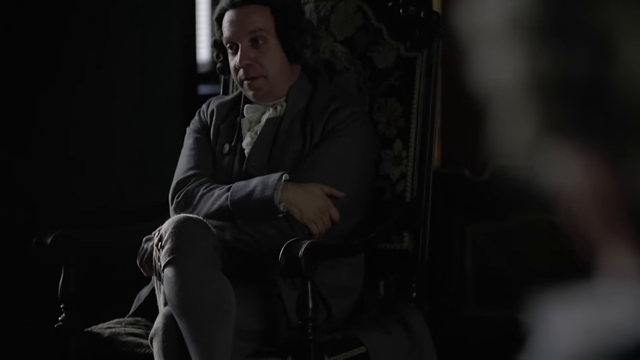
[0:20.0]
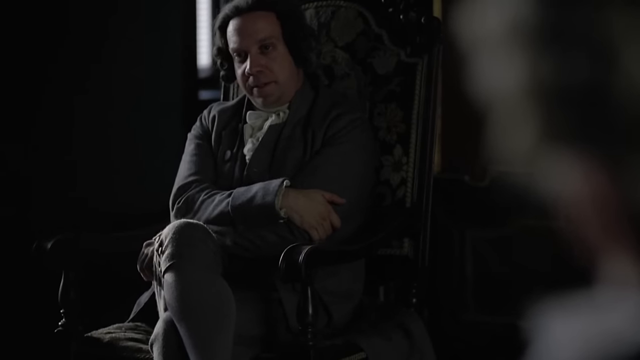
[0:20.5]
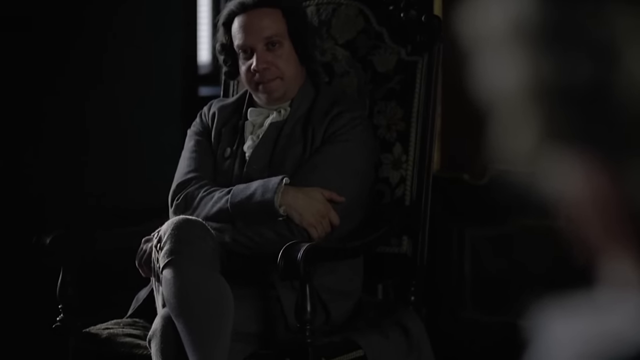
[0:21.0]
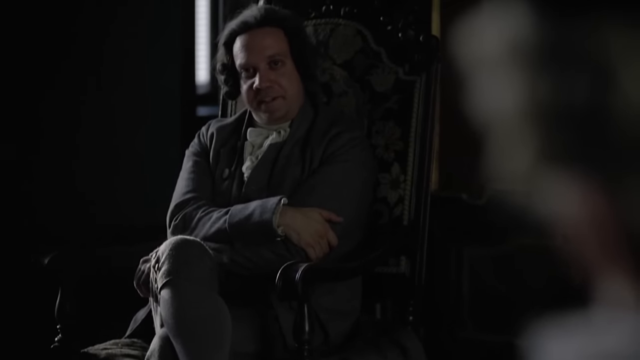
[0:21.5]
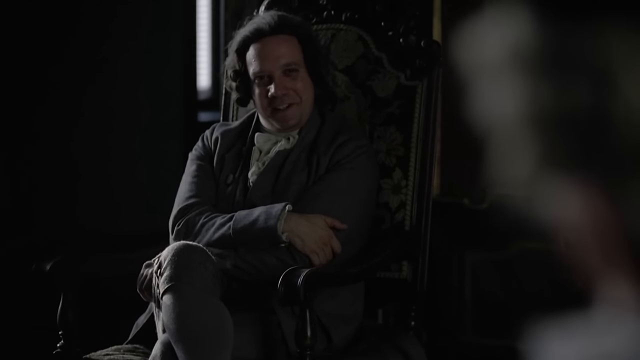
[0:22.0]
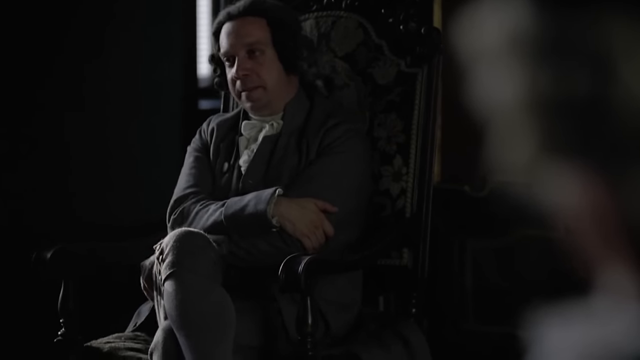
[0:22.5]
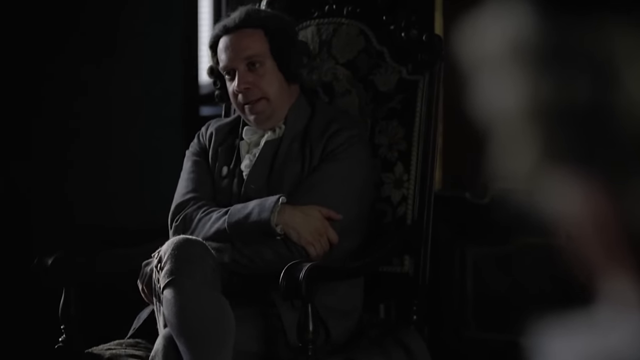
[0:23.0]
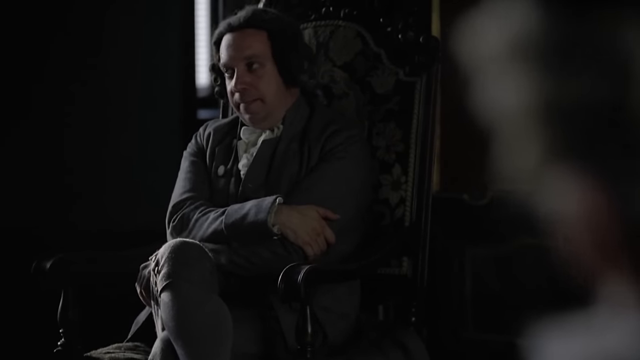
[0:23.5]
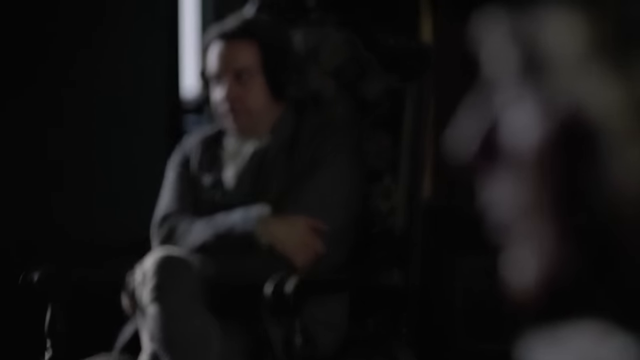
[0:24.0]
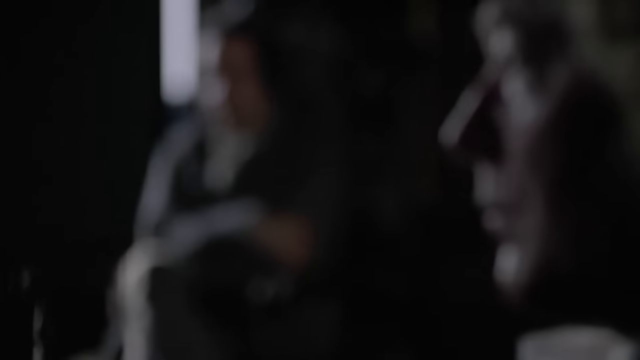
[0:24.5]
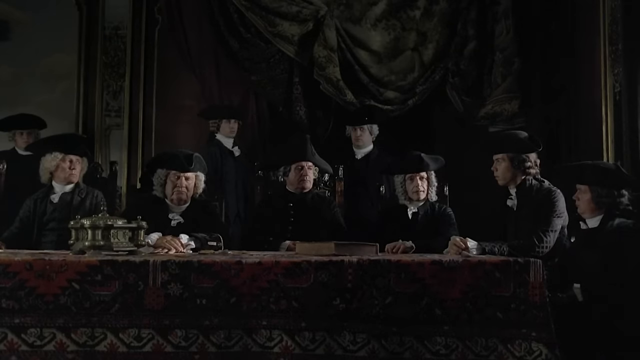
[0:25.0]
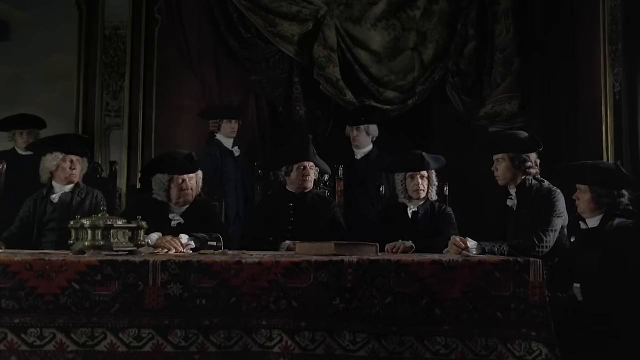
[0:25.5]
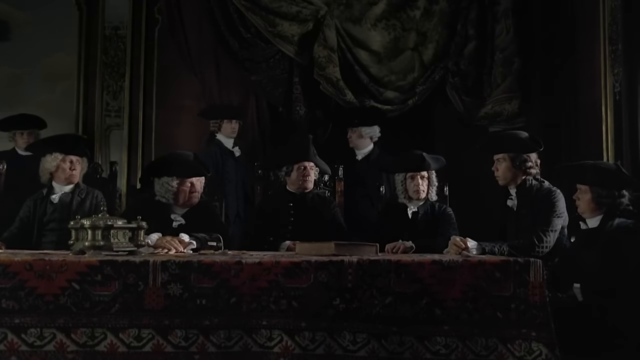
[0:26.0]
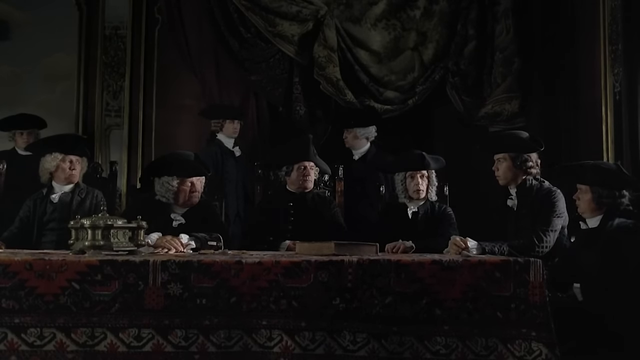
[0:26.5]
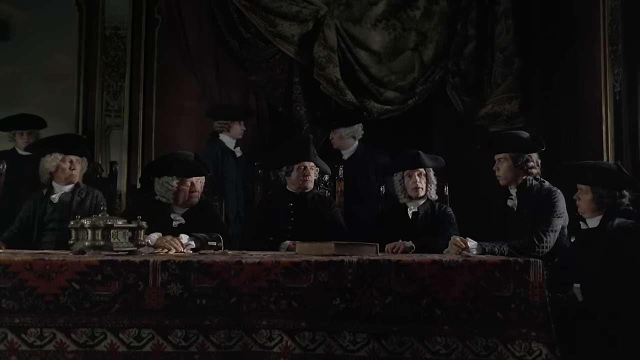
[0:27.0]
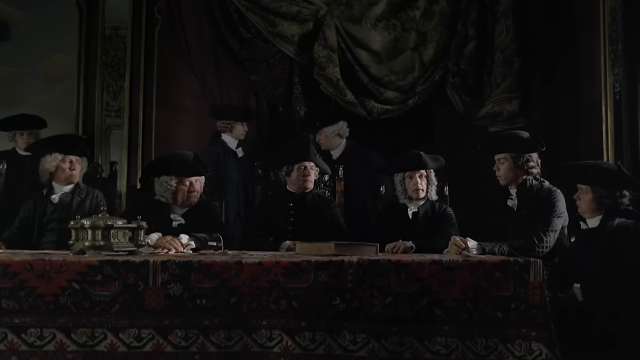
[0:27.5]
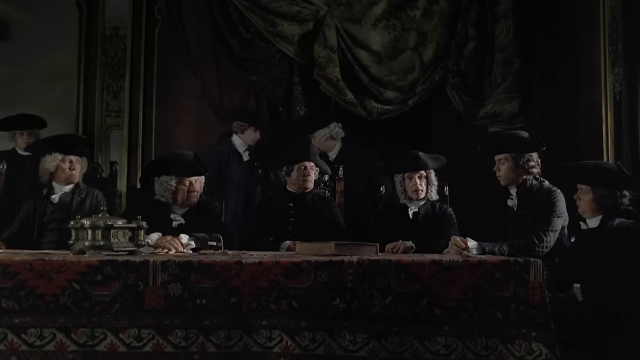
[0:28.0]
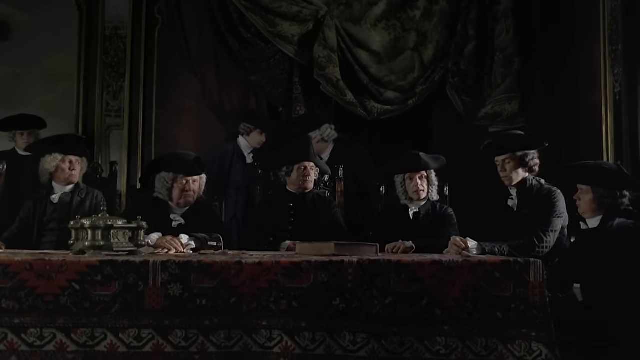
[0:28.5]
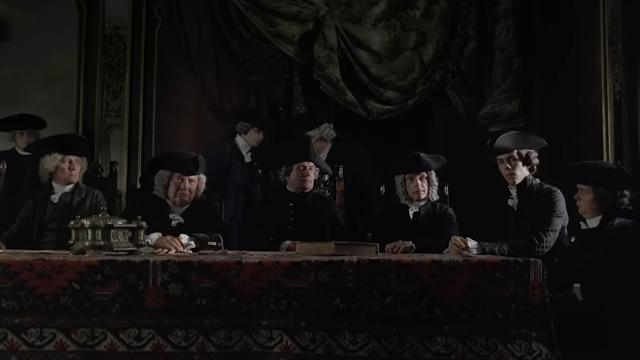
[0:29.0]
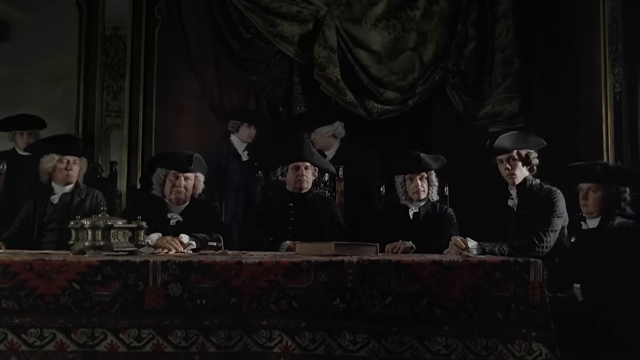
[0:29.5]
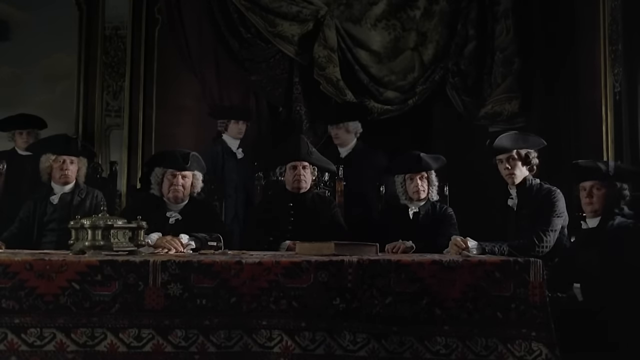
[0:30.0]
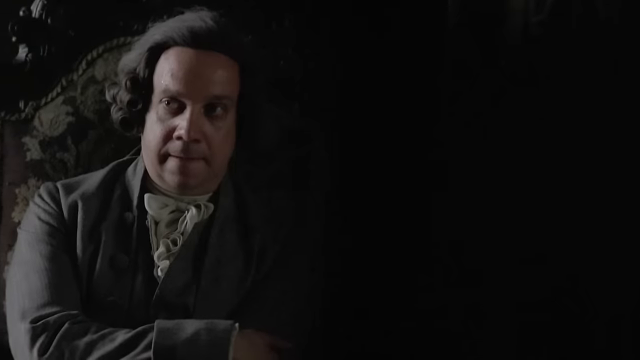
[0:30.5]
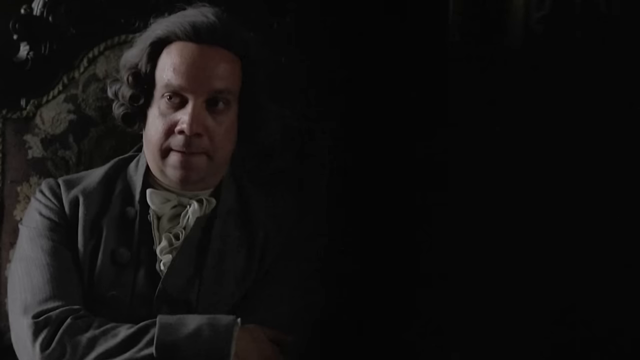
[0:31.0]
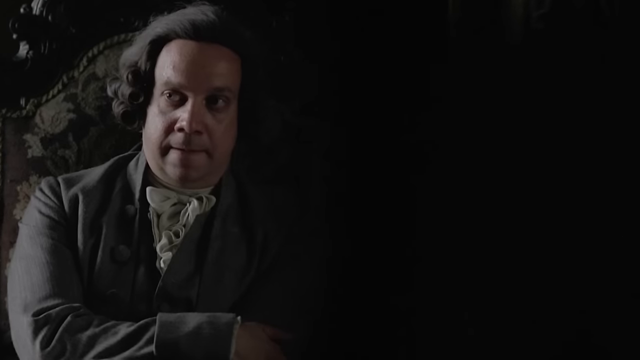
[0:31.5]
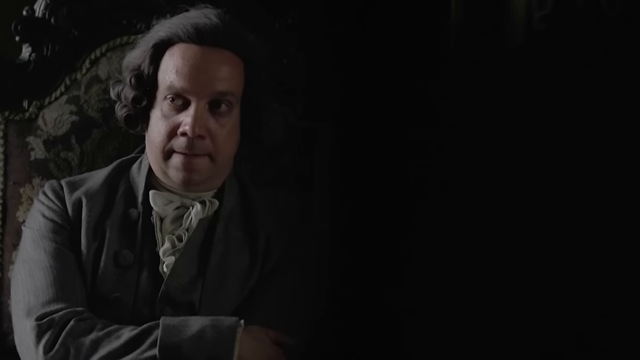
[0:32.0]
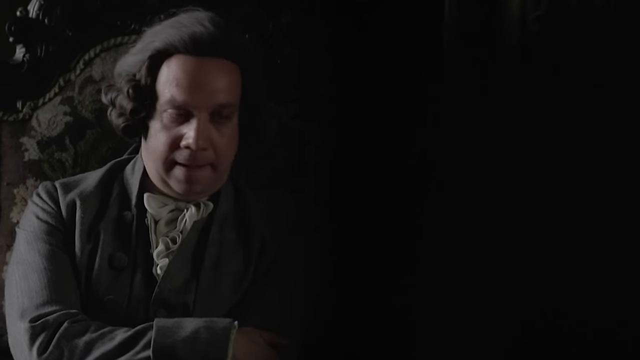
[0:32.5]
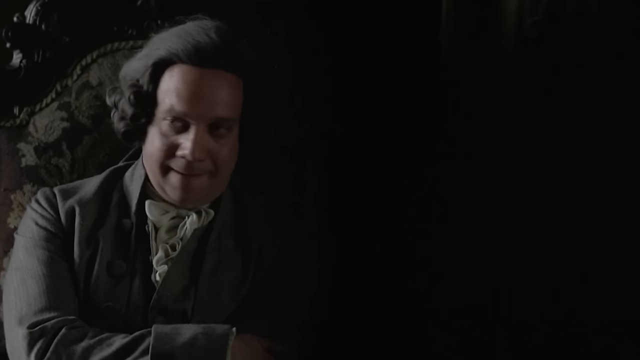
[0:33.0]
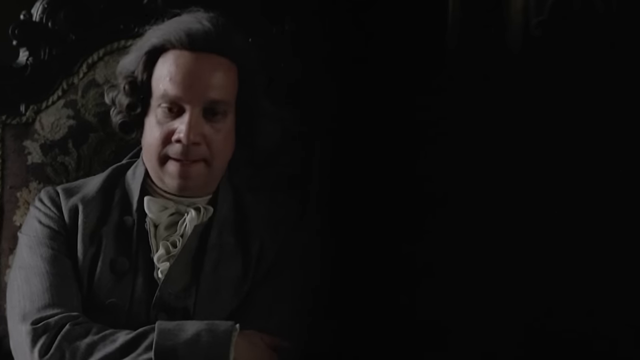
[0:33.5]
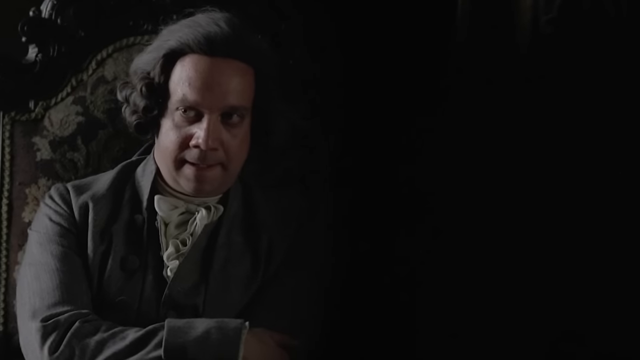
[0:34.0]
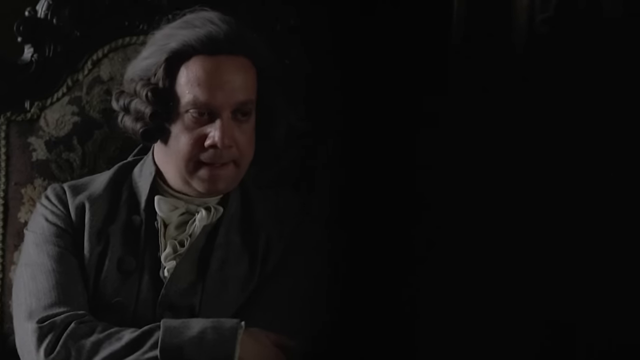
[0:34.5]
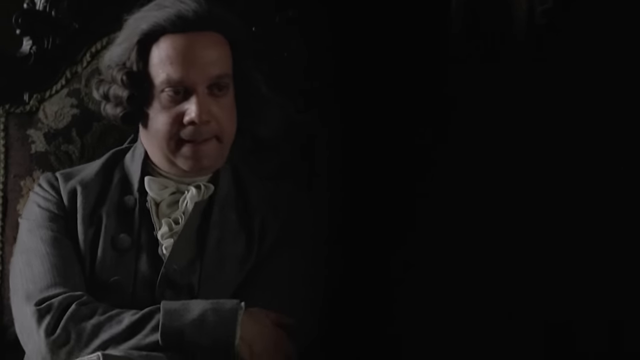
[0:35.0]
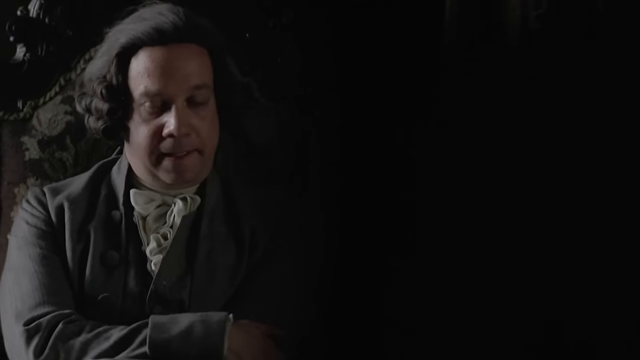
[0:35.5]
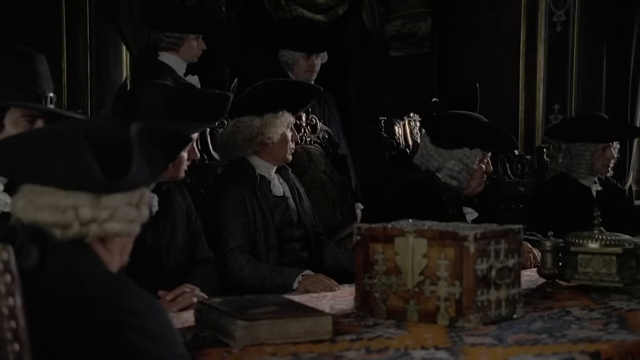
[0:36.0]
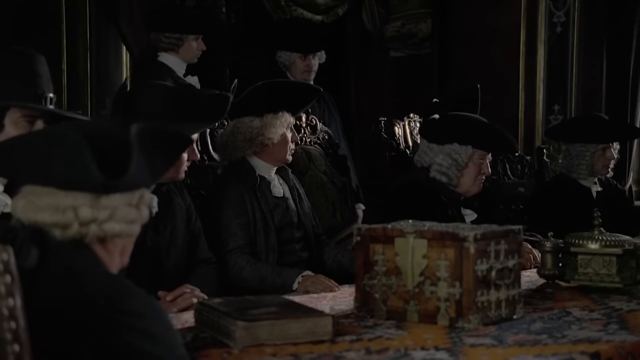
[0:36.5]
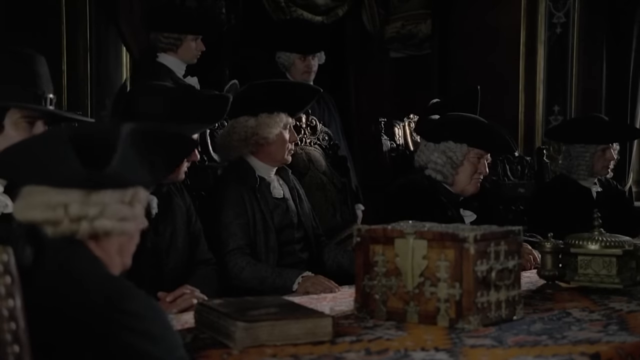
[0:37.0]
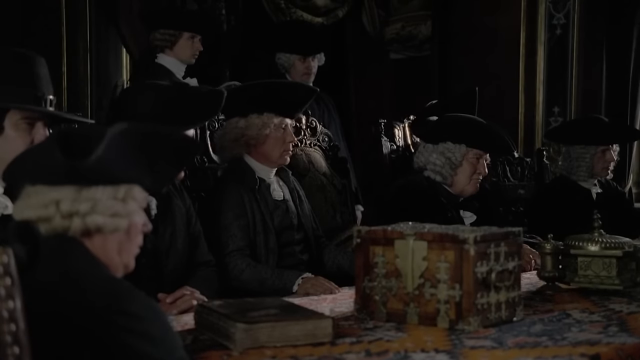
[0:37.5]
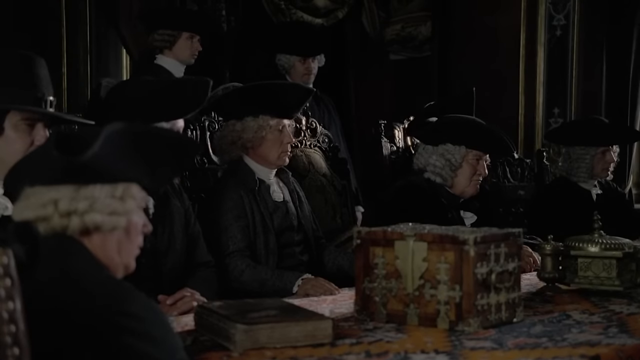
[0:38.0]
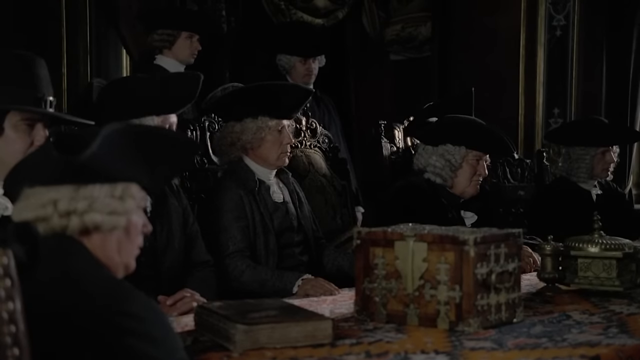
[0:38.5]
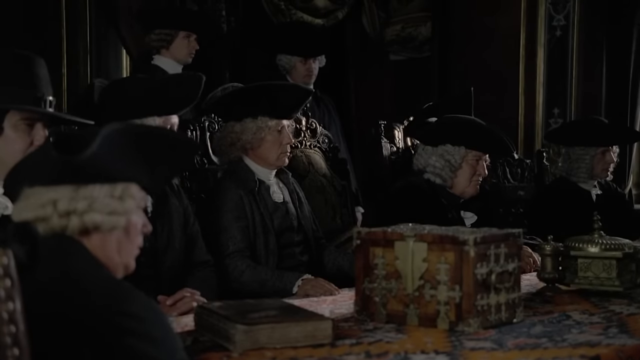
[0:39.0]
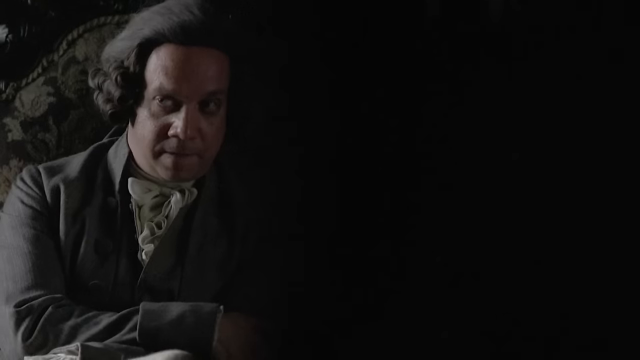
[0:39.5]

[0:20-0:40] The man continues talking, addressing the group. The listeners now move, looking at each other and whispering while he speaks. Behind the seated people, some others stand wearing black attire, and they look back at him. He looks directly at them as he speaks about something serious, and they pay close attention. The man has long hair, while the listeners have white hair and are wearing wigs.